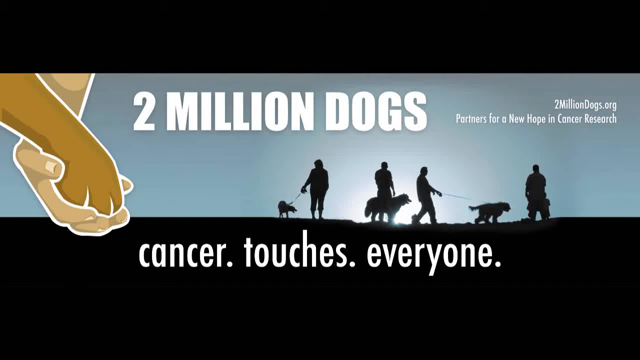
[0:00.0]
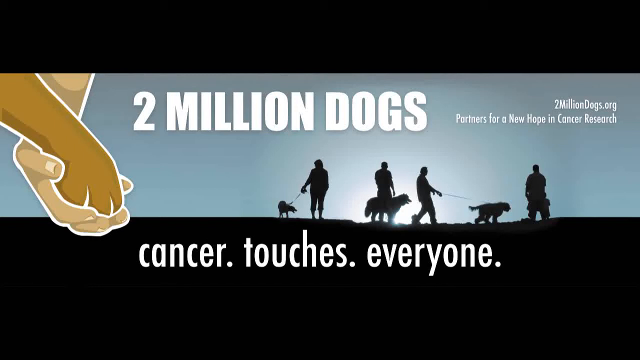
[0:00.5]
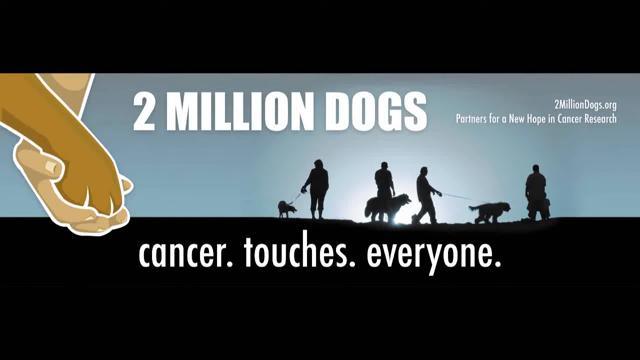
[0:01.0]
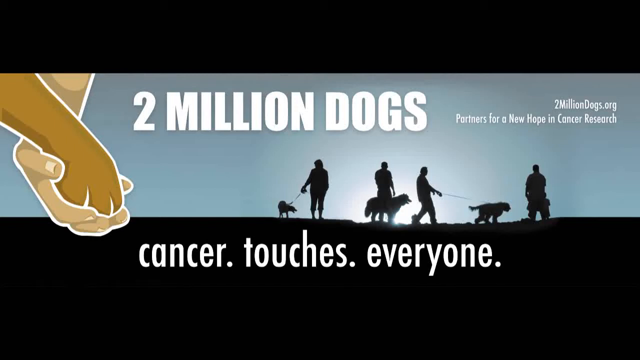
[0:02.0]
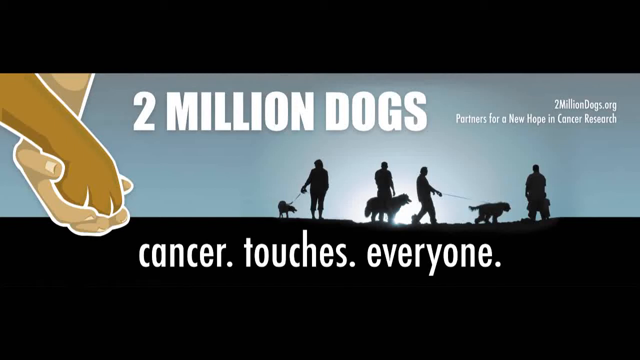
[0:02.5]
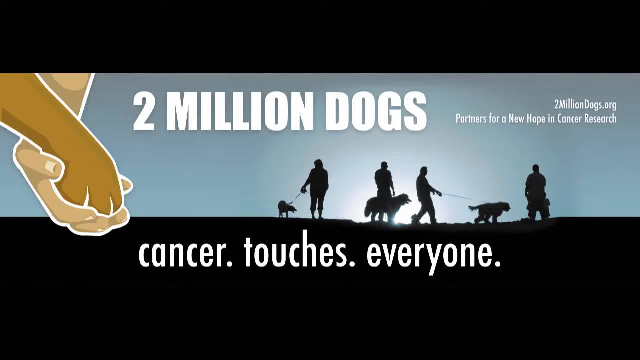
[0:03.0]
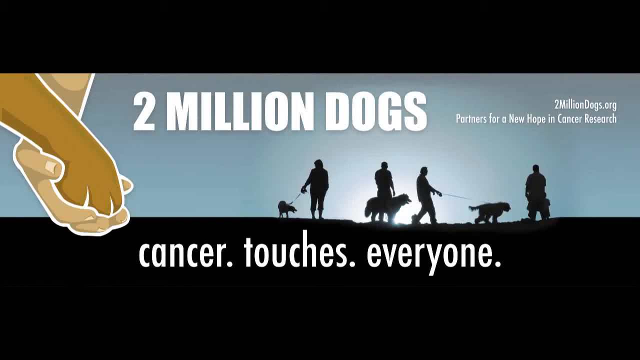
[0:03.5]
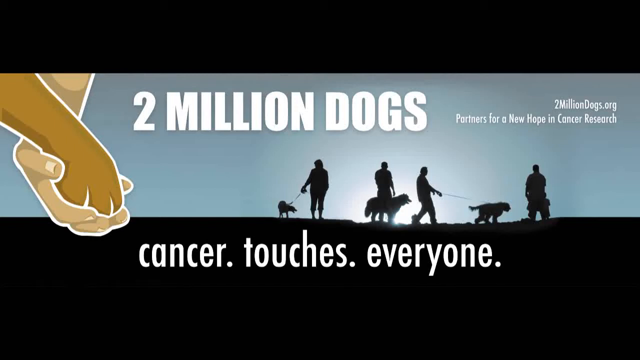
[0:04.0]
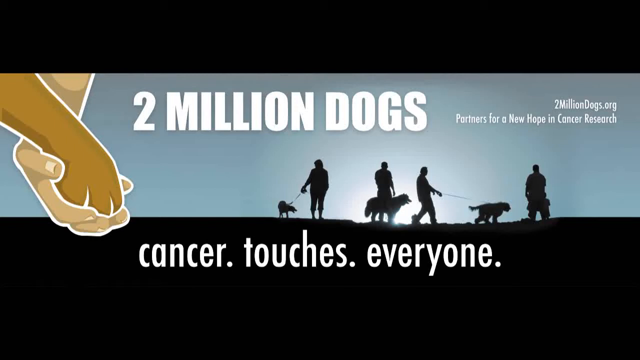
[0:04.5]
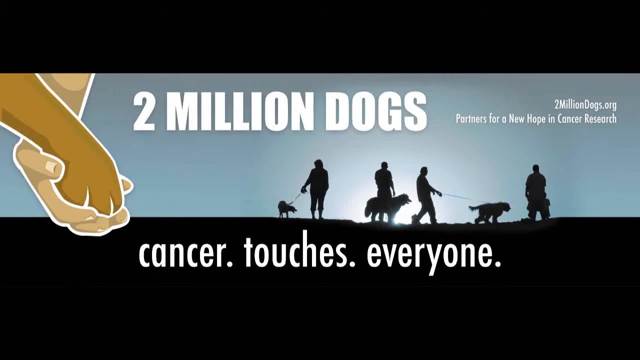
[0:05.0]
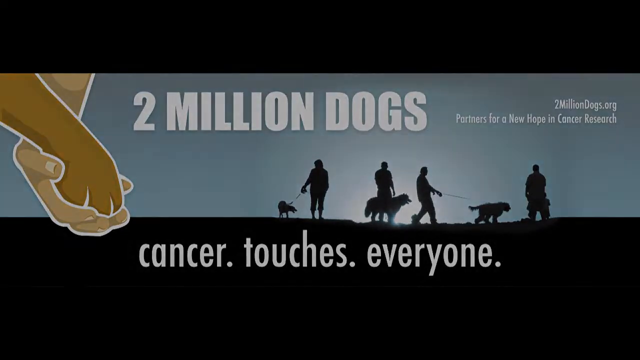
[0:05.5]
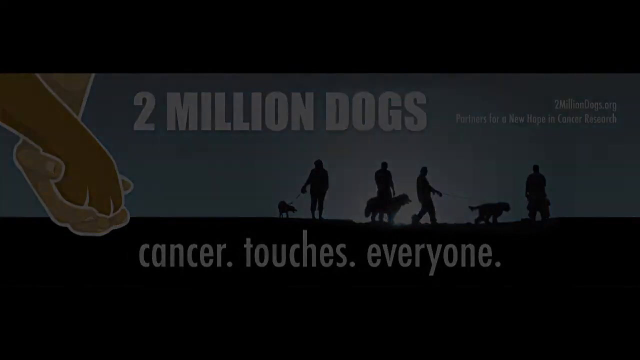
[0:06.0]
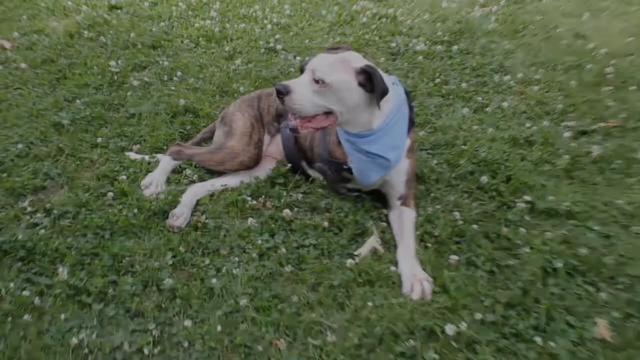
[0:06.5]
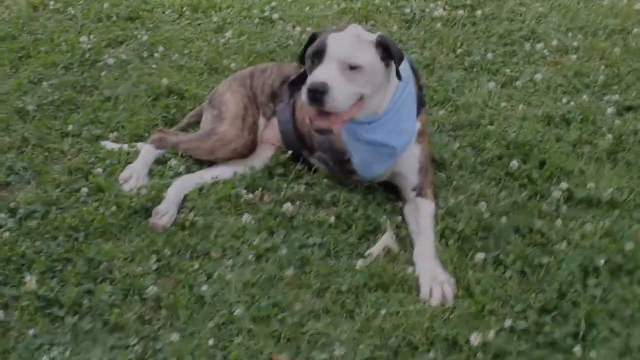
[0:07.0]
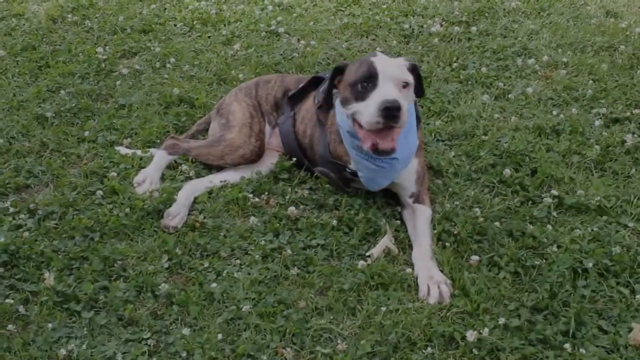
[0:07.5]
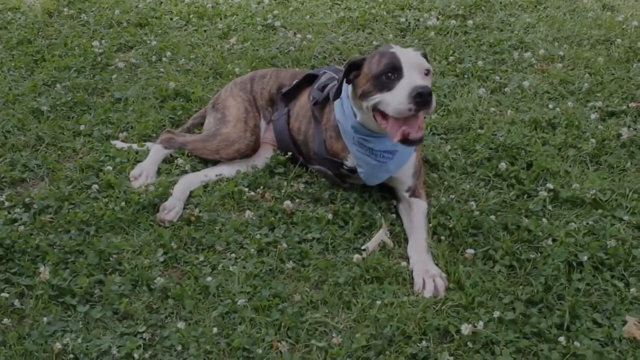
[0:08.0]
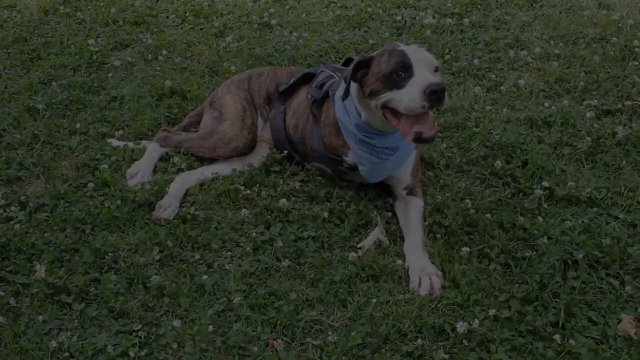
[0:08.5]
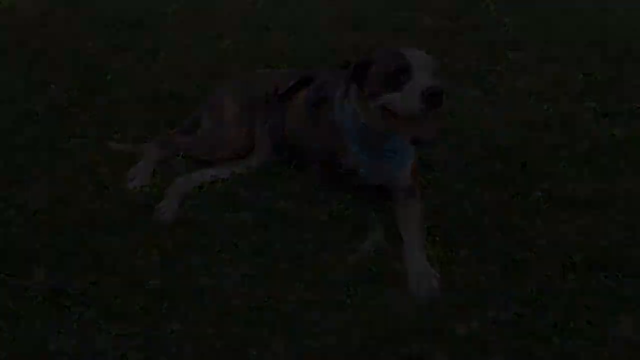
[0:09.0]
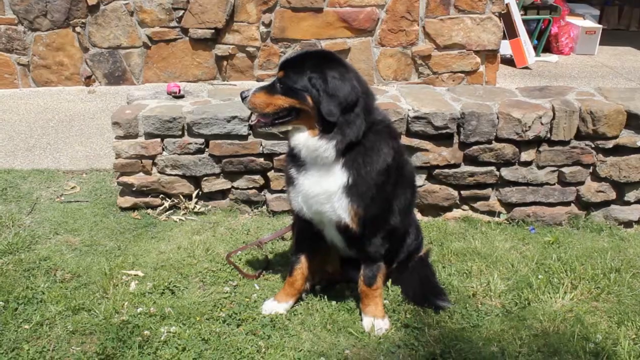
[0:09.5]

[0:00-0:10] On-screen text reads "cancer touches everyone". Four people hold their dogs on leashes and walk them down what looks like a hill. The sun is rising and the sky is blue, with some black in the frame as well.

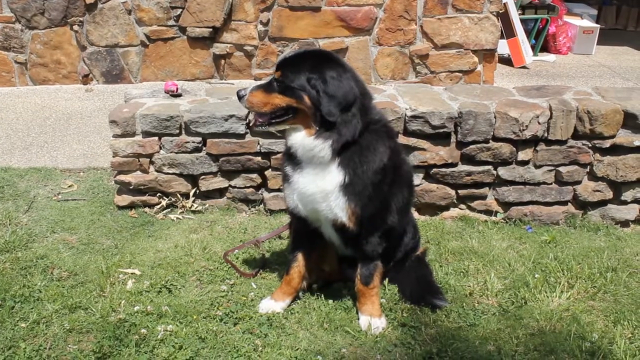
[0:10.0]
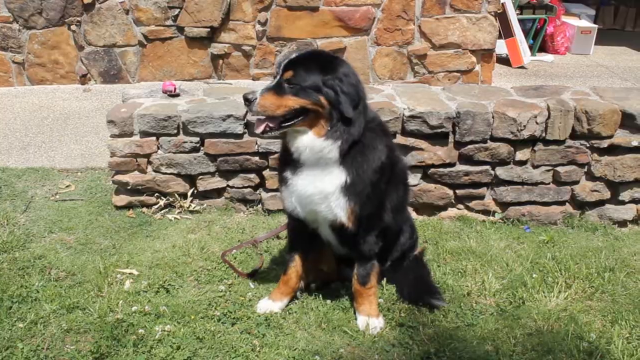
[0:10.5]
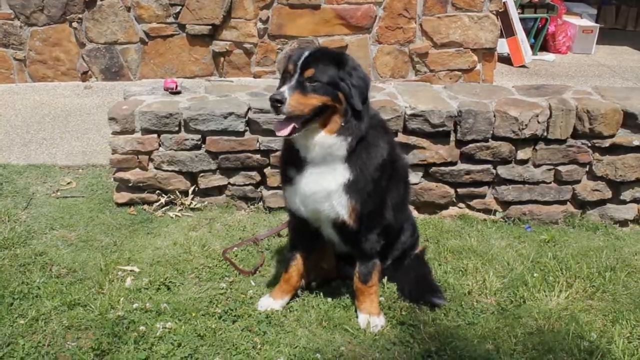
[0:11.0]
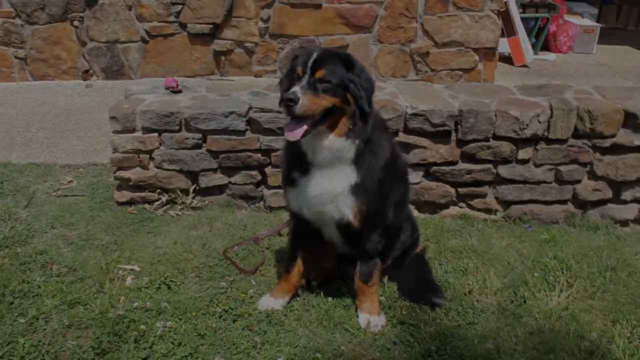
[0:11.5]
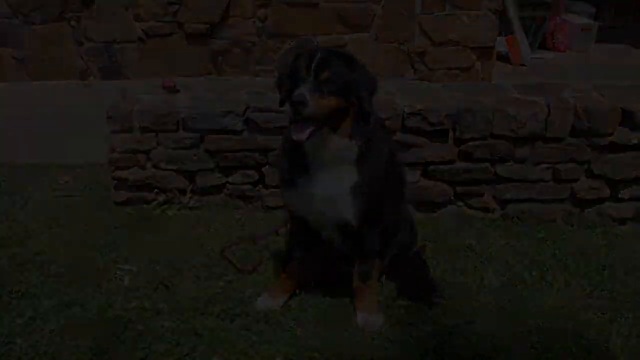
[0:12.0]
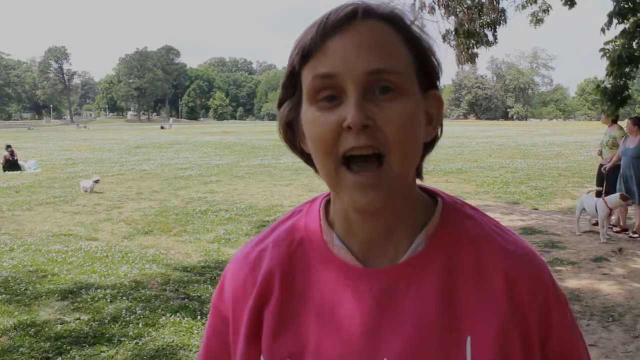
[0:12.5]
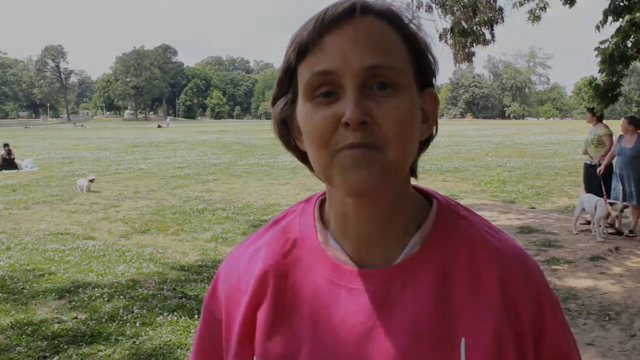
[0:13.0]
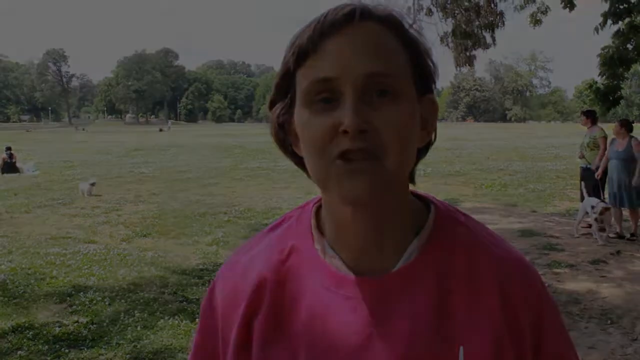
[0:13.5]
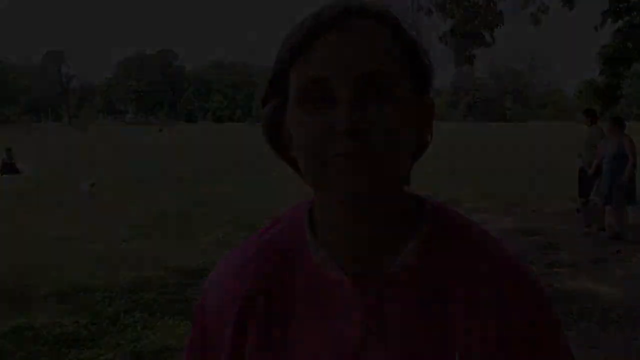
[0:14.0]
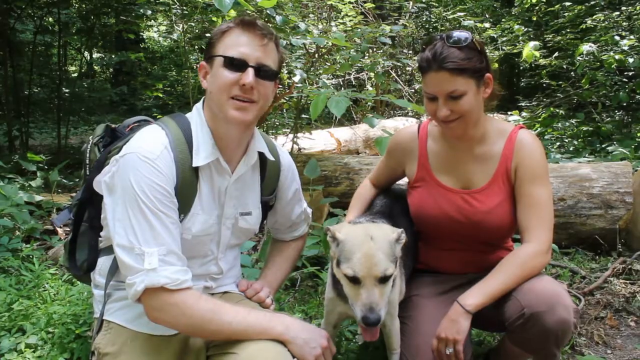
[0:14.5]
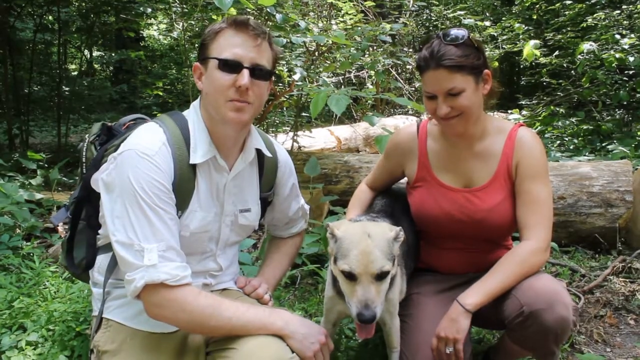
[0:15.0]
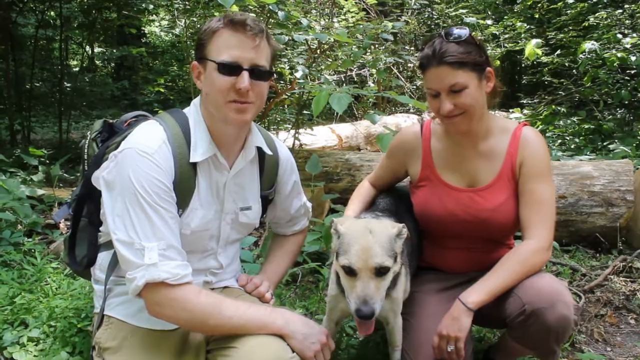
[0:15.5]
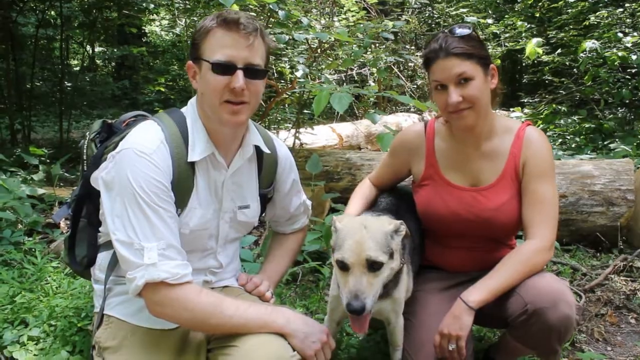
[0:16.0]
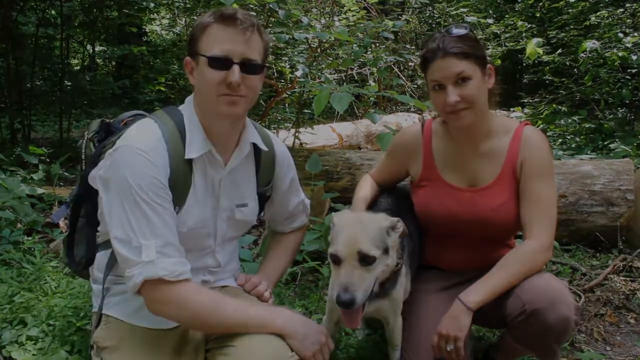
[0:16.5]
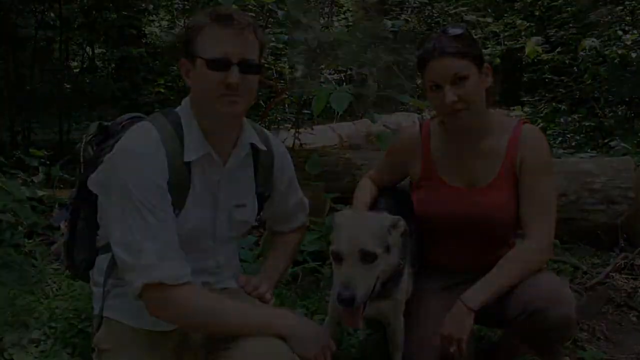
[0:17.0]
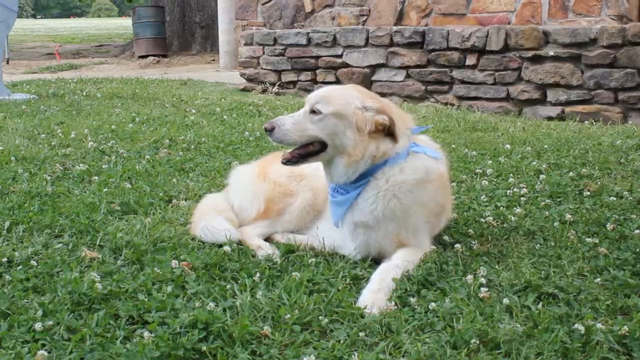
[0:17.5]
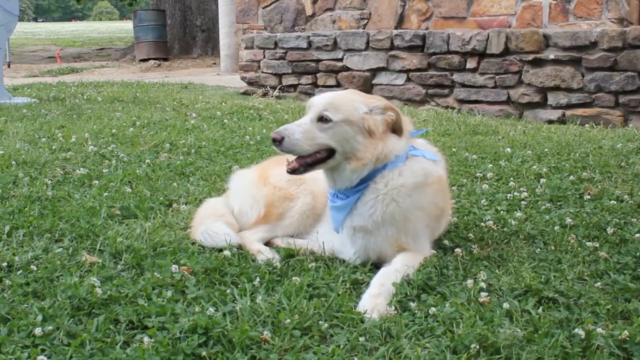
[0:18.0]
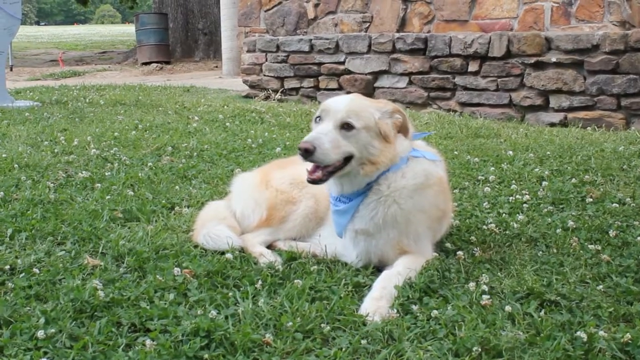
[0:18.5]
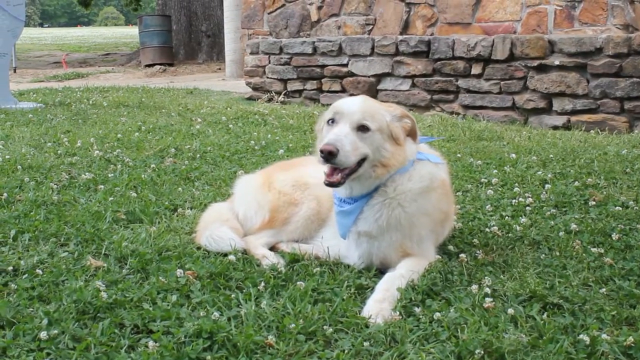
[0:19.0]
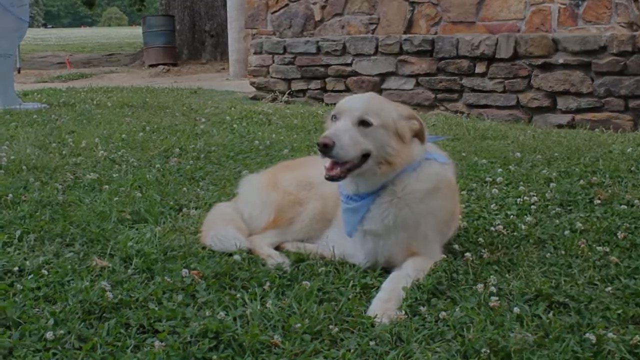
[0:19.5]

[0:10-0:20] Text states that a lot of people have been affected by cancer. A black and brown dog with white on its chest appears, and a woman talks to the camera. A man and a woman who look like a couple are shown; the woman holds the dog, and the man wears shades. There is a satchel on a back, and she wears a white formal shirt. Another dog with a shade of brown is shown. It is a sunny day, and people are in a forest. The dogs look healthy and in good condition.